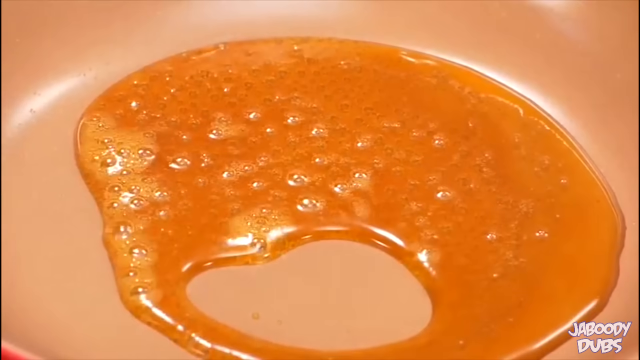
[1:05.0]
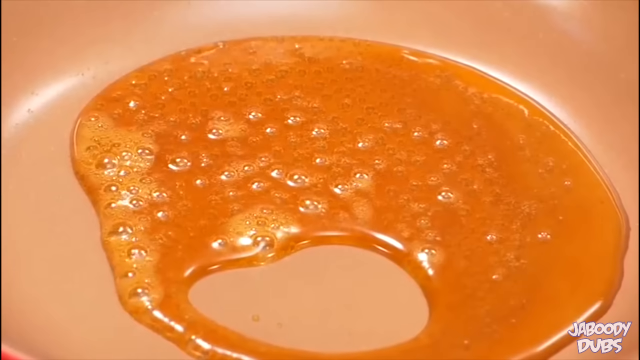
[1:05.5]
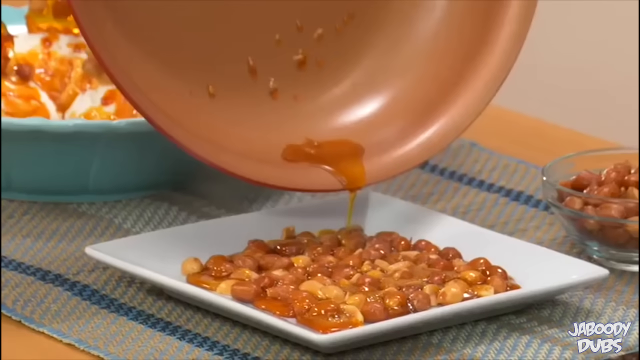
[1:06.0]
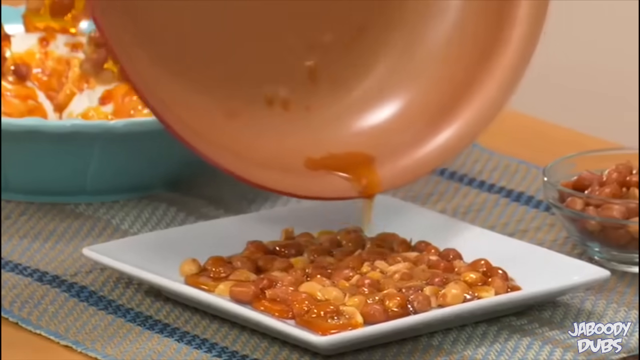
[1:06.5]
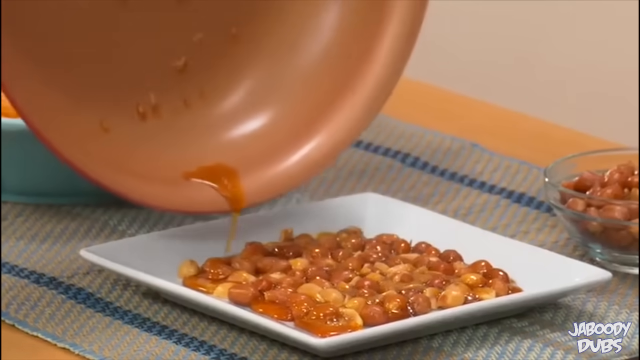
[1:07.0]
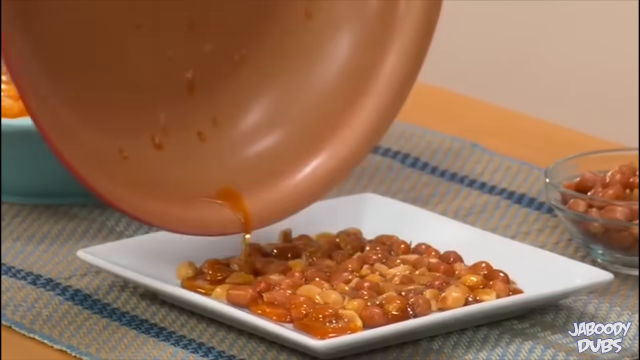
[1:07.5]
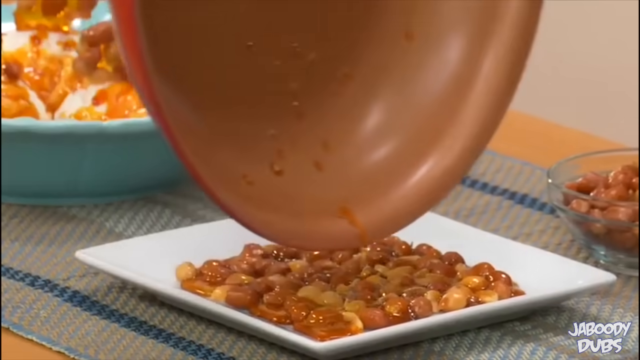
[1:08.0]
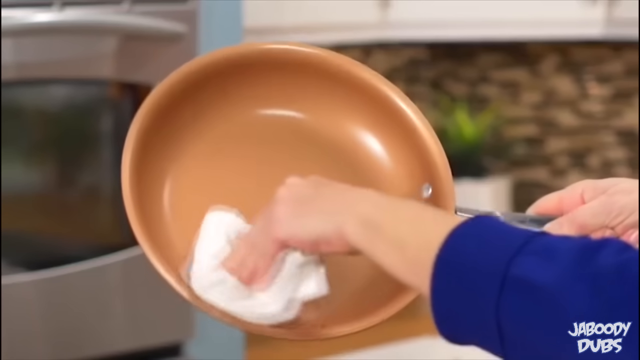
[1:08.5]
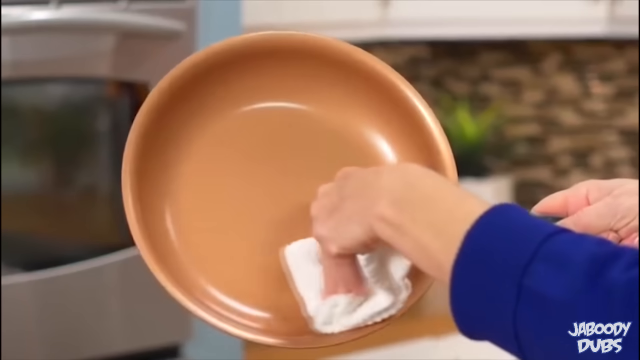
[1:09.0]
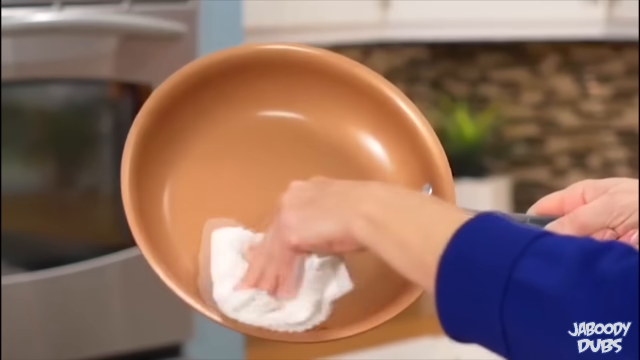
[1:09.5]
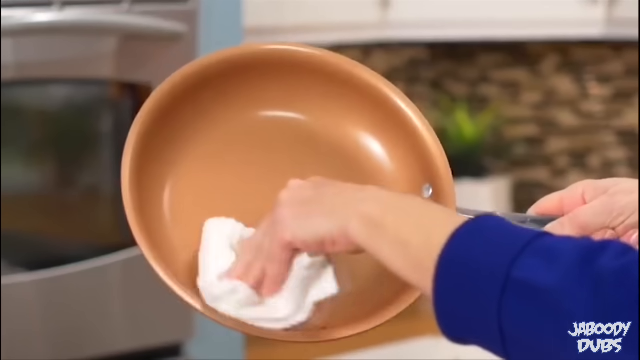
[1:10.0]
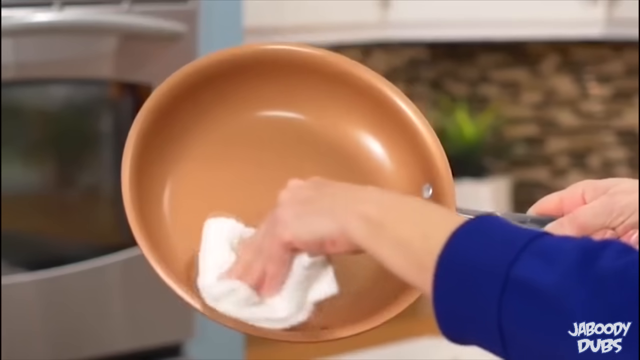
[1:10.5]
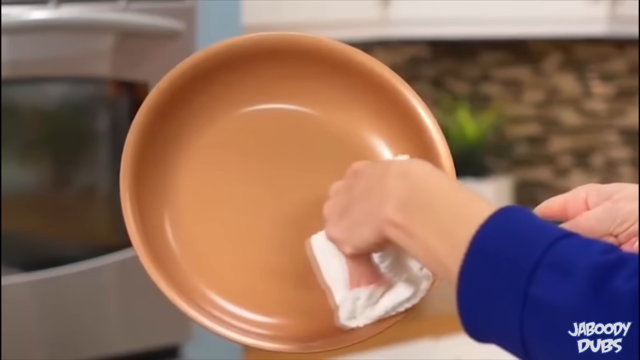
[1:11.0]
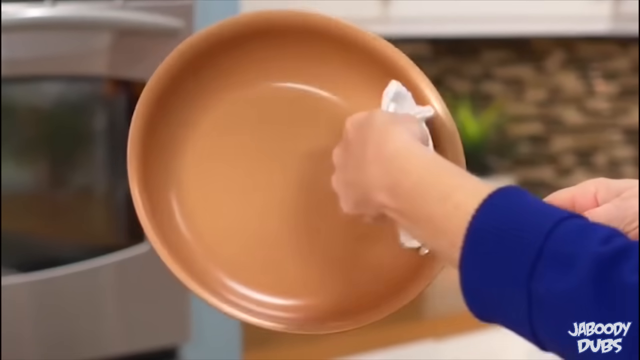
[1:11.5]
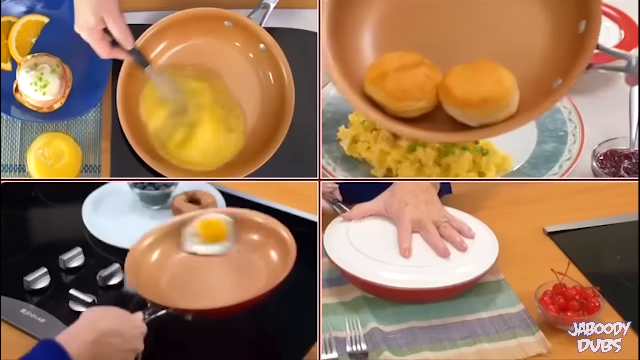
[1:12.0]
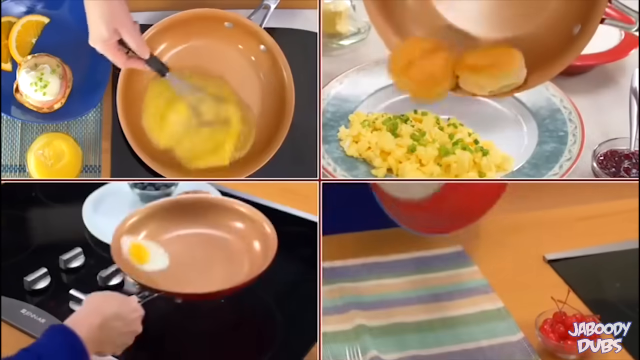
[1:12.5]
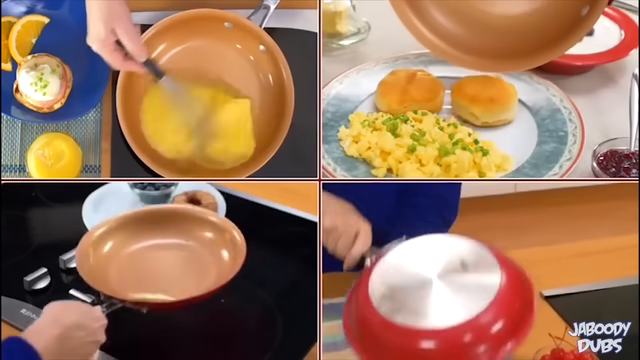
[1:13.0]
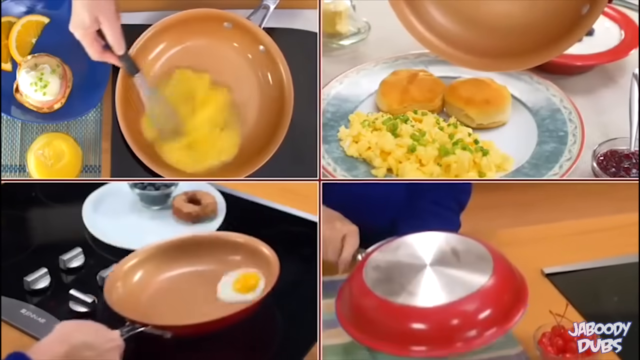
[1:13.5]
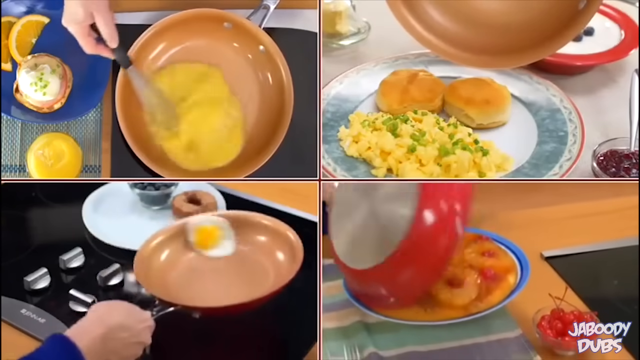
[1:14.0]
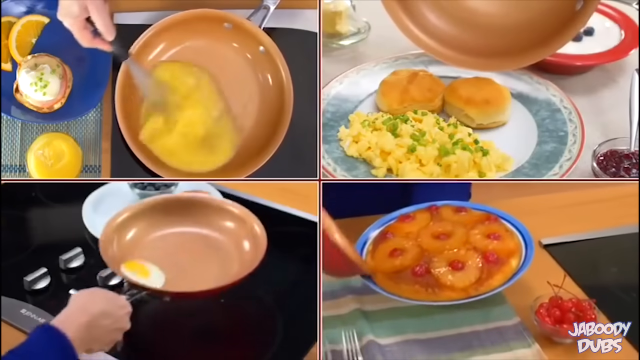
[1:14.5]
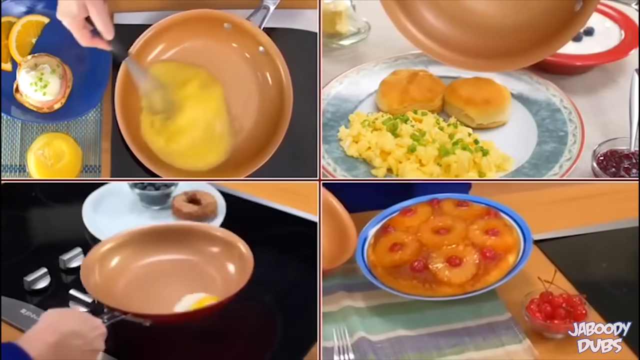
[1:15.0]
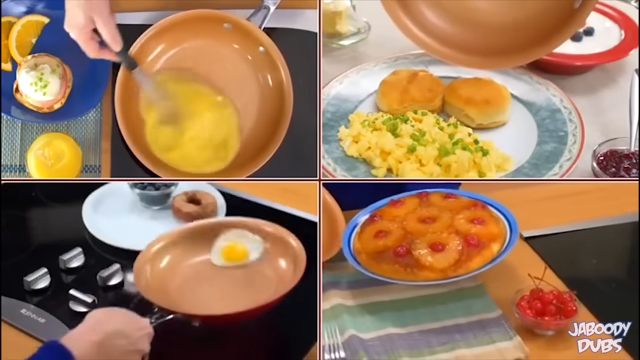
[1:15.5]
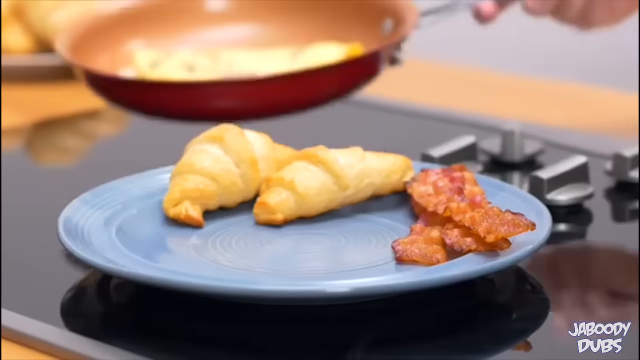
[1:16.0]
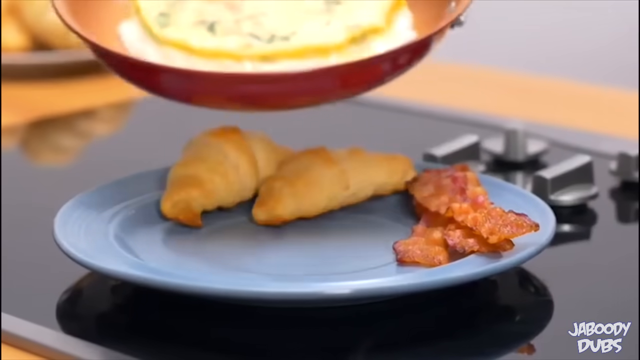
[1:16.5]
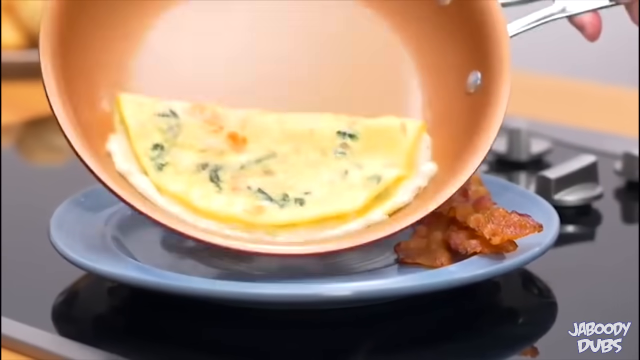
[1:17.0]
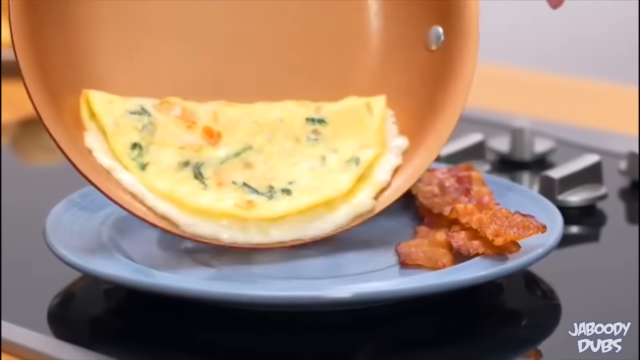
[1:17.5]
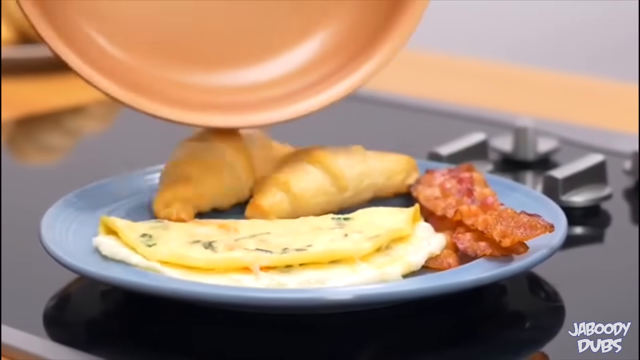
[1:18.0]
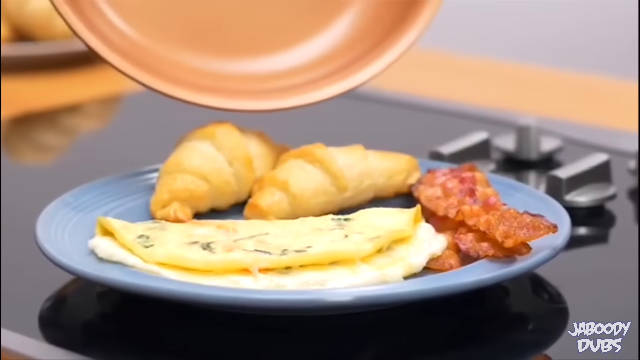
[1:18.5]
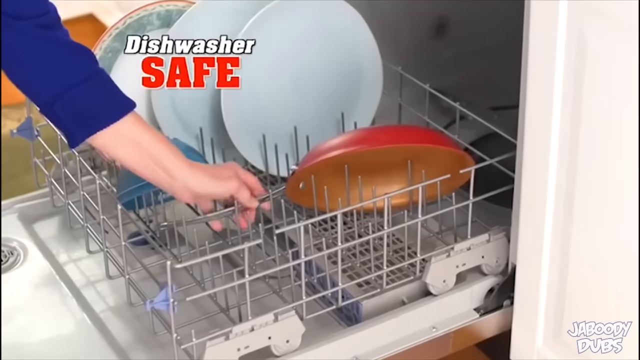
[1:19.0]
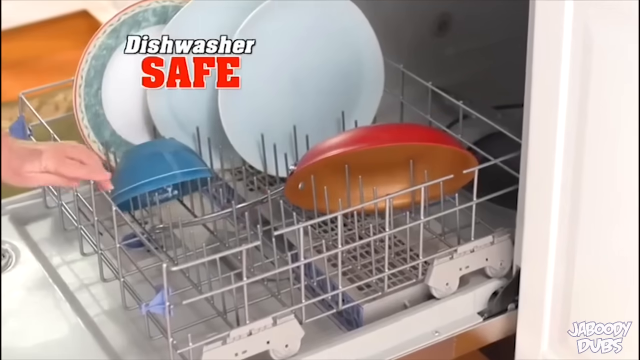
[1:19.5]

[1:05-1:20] A person melts what looks like sugar in a skillet, and a person cleans the skillet with just a white towel. A screen shows many different foods being cooked in a skillet, and a skillet is put into a dishwasher. A person scrambles eggs in the skillet with a fork. An egg is swirled around, and an omelette slides right off, apparently demonstrating that the skillet does not stick; the melted sugar also comes right off. Various dishes come right off the skillet, some seemingly omelettes and some just eggs, and eggs are scrambled in it. It looks like a pie is also being made, and the skillet appears to be put into the dishwasher. The video cuts back to making an omelette and melting sugar.